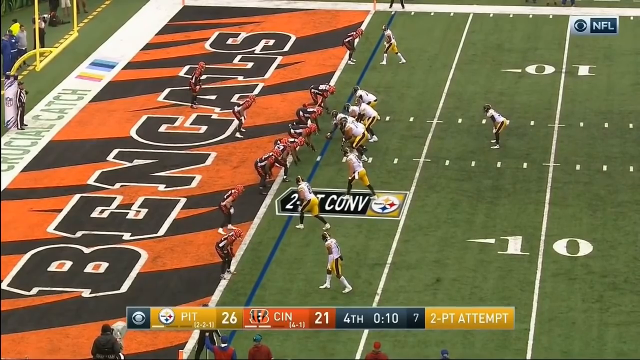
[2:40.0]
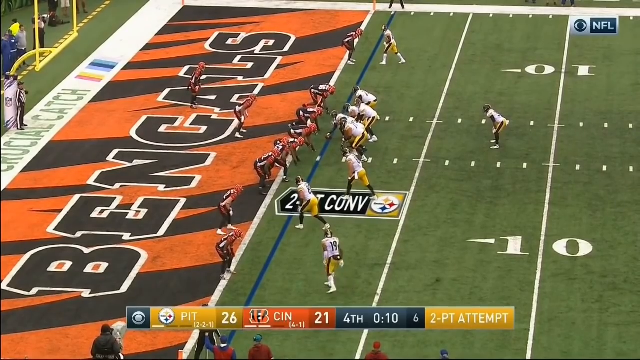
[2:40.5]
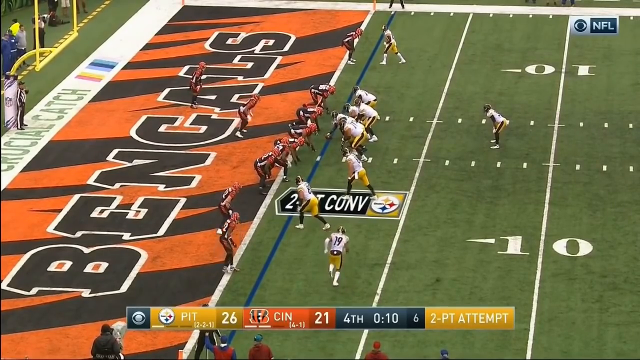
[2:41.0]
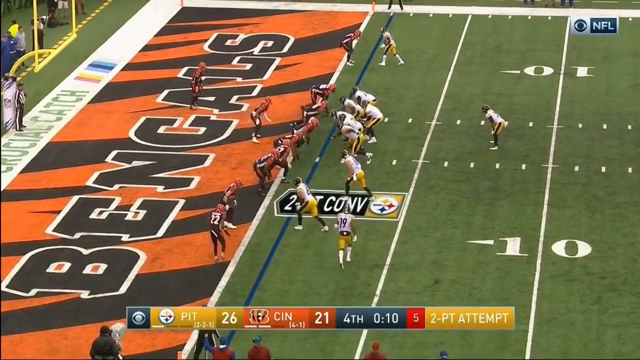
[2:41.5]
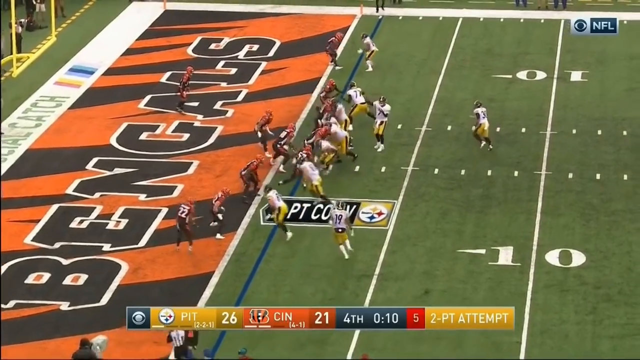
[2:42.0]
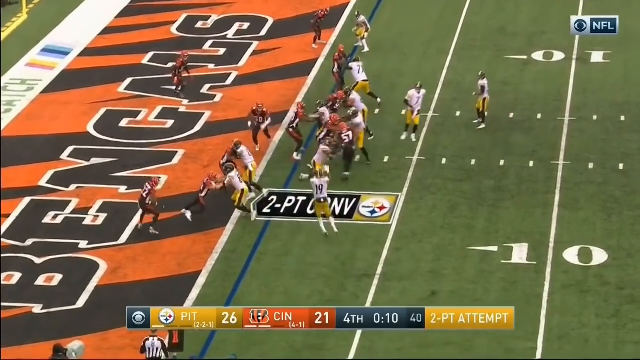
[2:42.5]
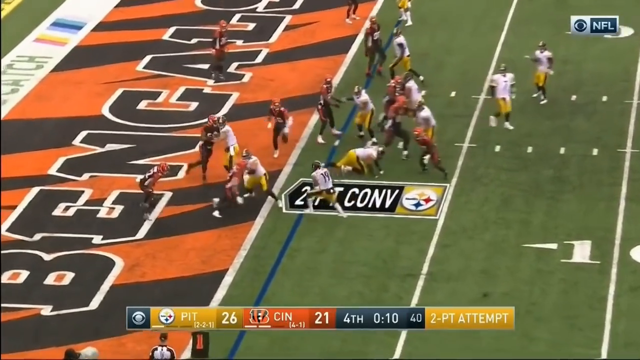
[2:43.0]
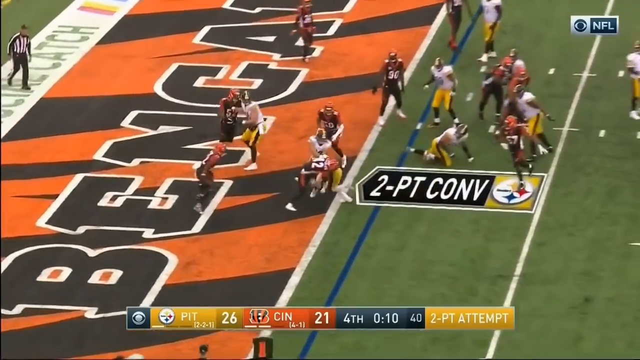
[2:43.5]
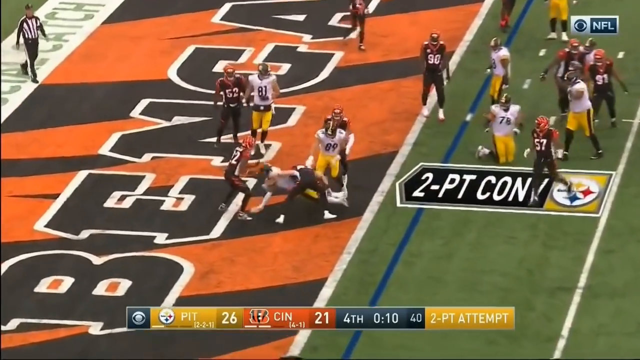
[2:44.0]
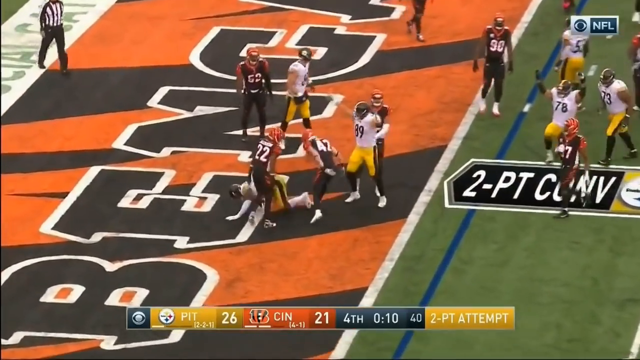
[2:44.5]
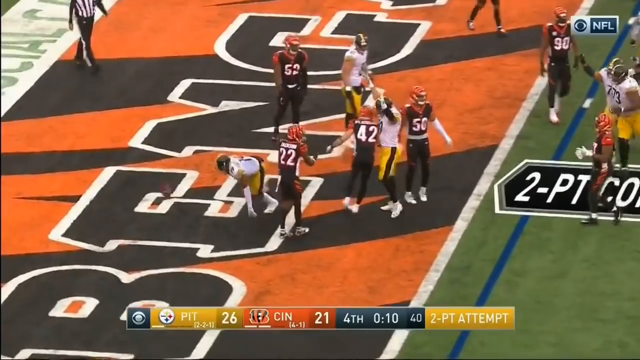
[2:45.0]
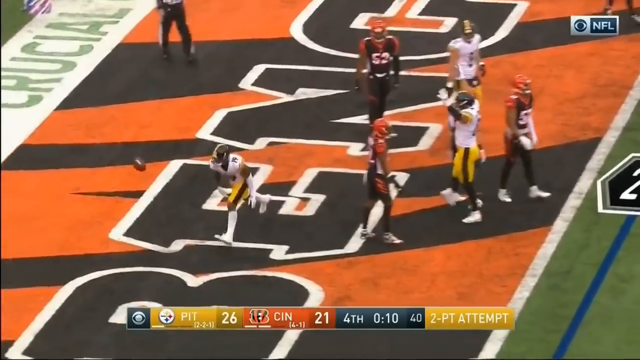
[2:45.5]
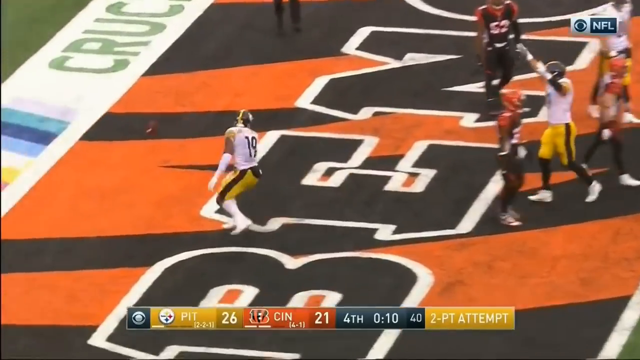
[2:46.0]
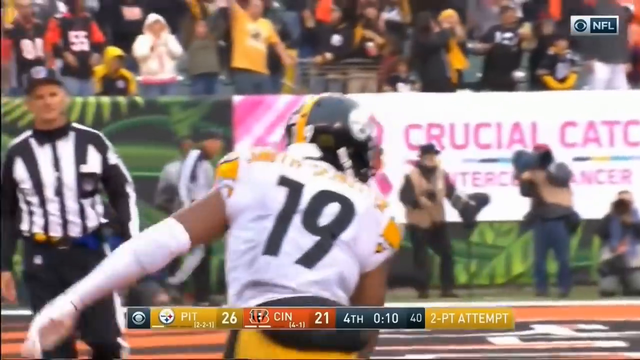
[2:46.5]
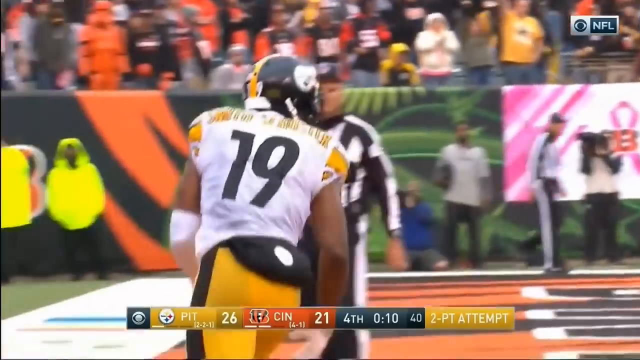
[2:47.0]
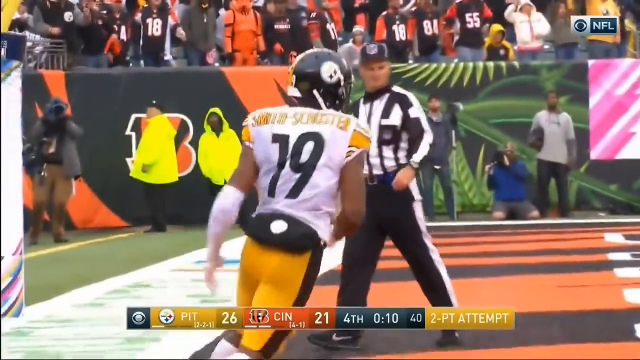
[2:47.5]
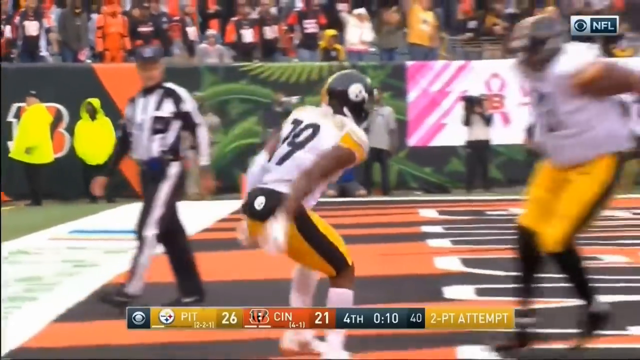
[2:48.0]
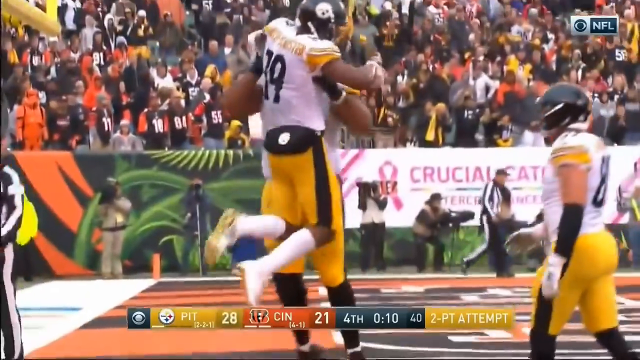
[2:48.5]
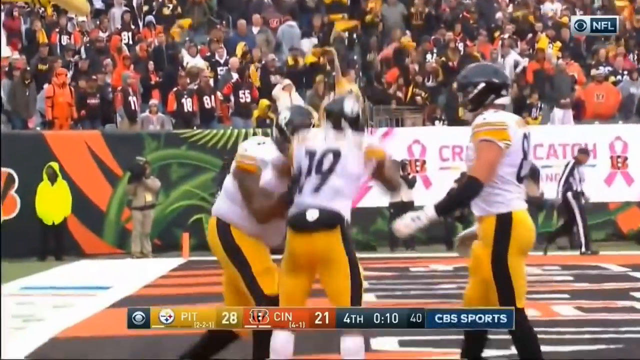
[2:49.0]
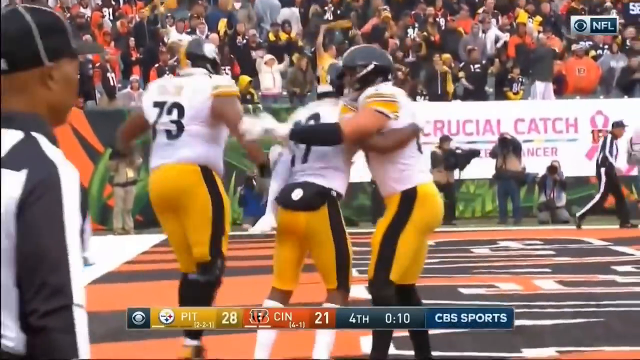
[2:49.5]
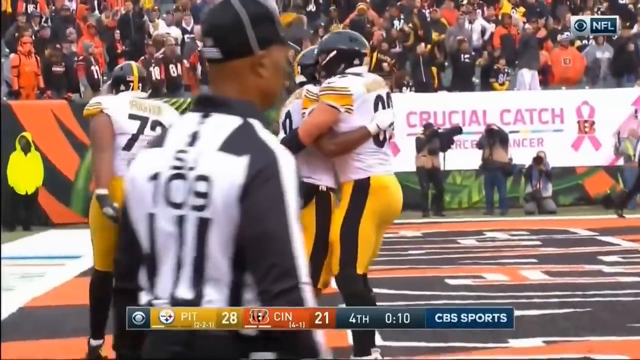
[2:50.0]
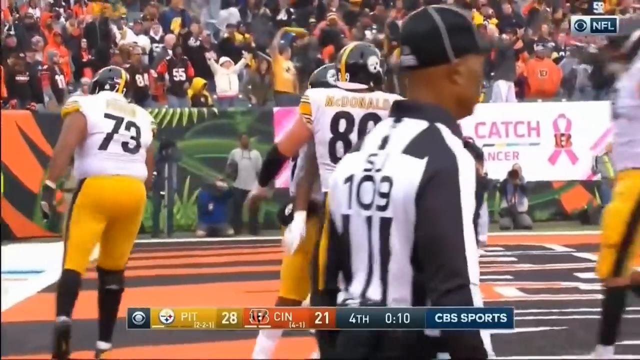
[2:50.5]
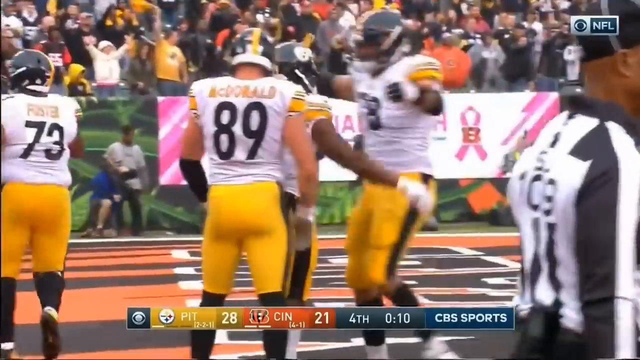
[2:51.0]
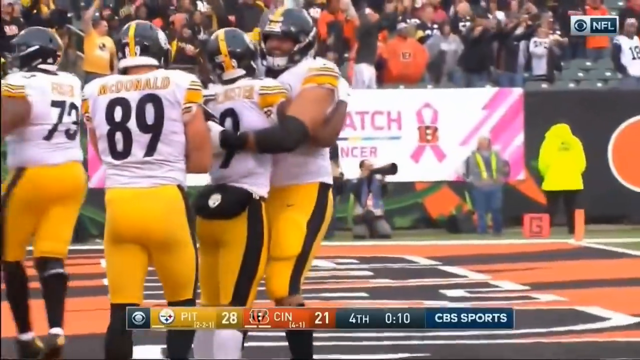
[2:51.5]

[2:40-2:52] The team appears to reattempt the two-point conversion: the players line up similarly to before, but number 84 is not running around as he was the first time. The ball is given to a player who dives into the end zone and seems to get through. He drops the ball, stands up and starts running around; he is number 79, jumping up and down and celebrating. He jumps in the air and chest-bumps number 73, and number 89 comes over and hugs him. Referee number 109 walks around in the foreground as other players run over to congratulate him.